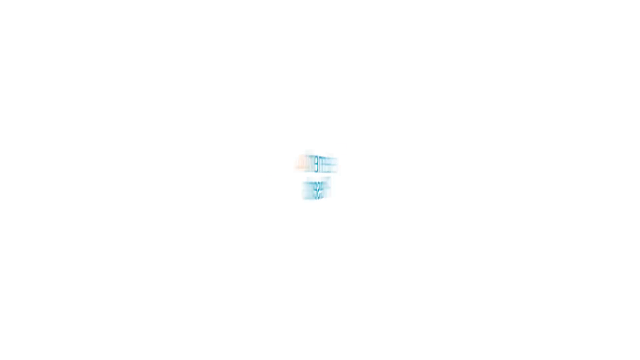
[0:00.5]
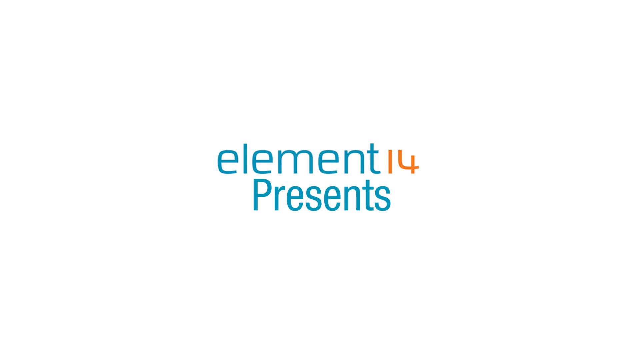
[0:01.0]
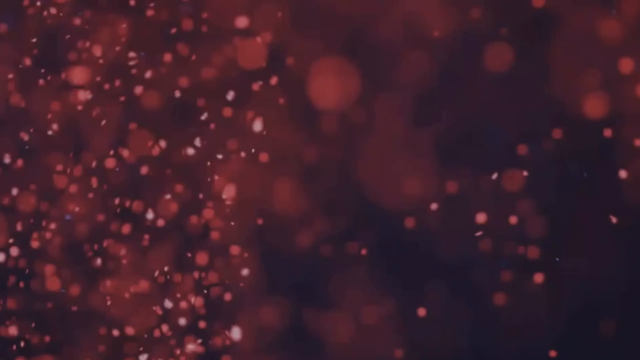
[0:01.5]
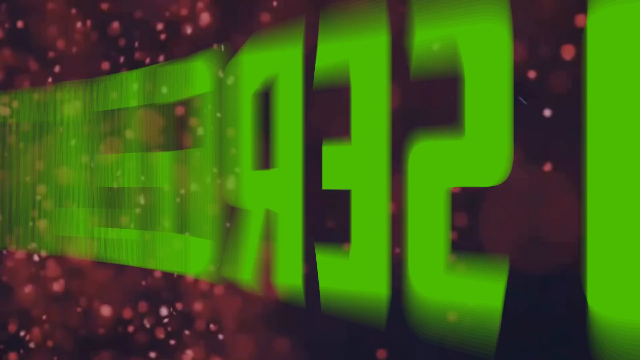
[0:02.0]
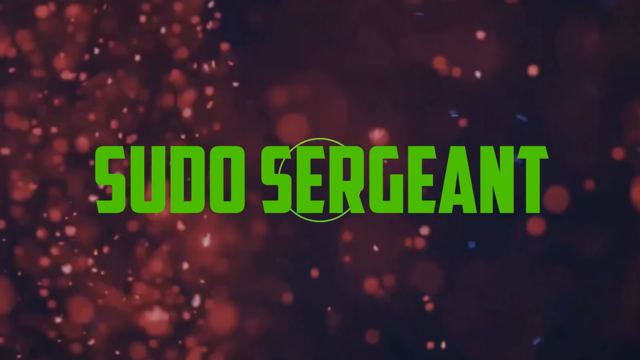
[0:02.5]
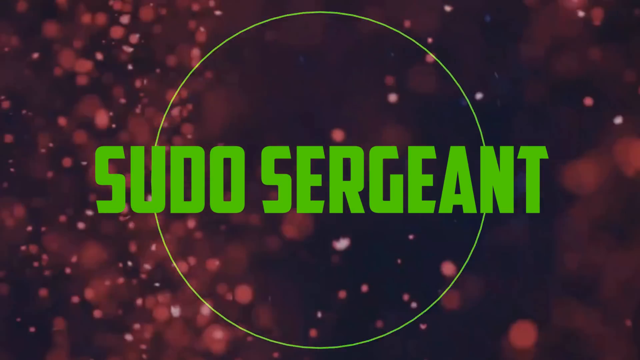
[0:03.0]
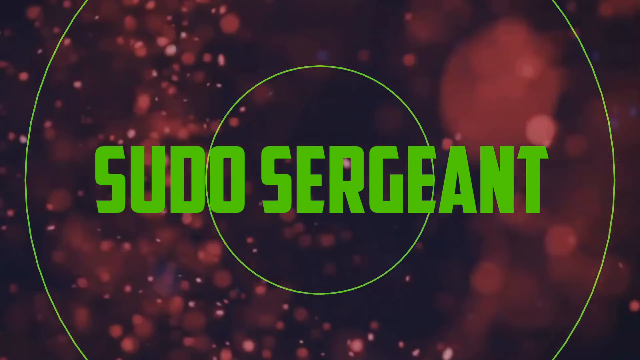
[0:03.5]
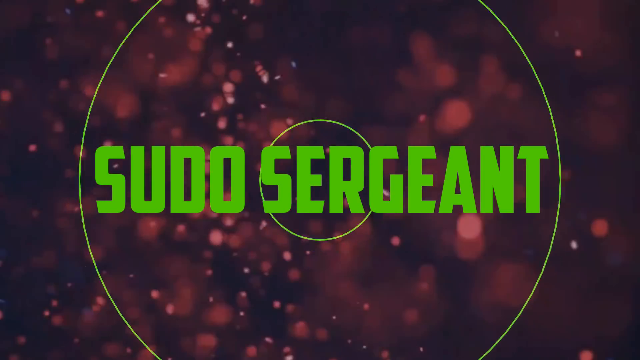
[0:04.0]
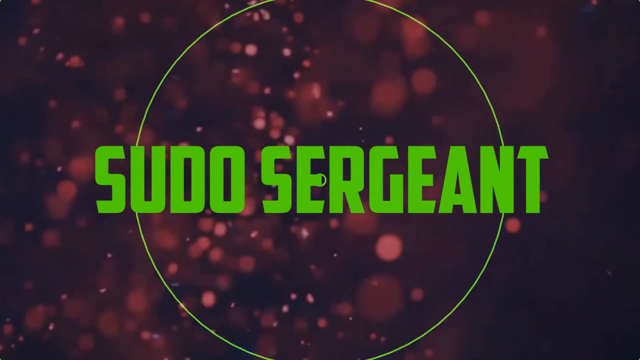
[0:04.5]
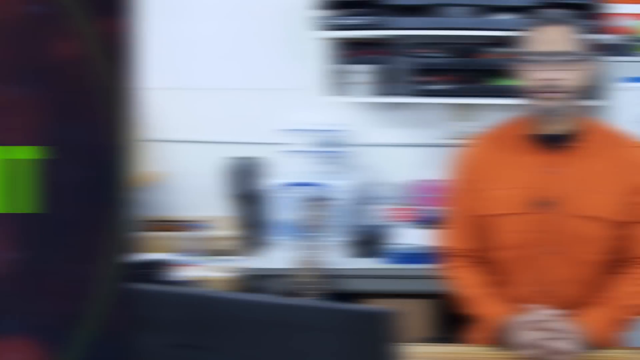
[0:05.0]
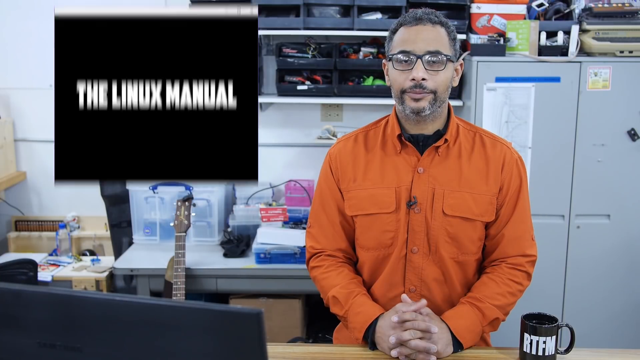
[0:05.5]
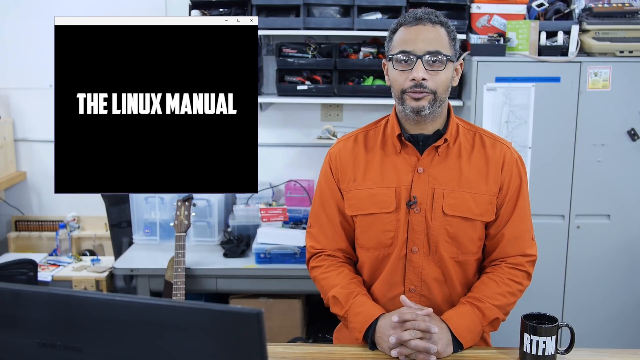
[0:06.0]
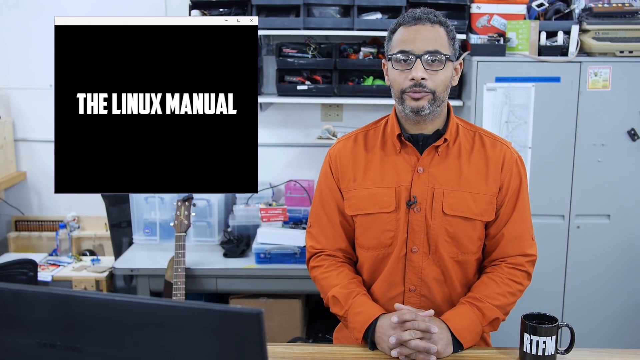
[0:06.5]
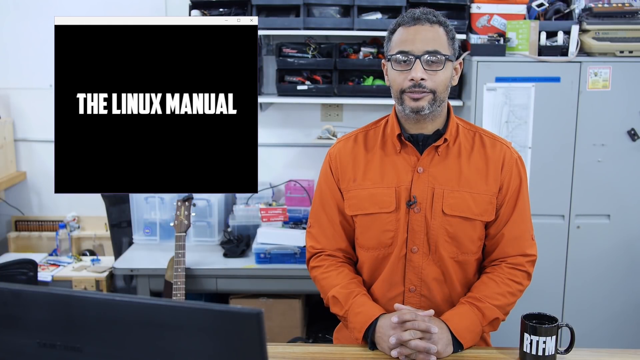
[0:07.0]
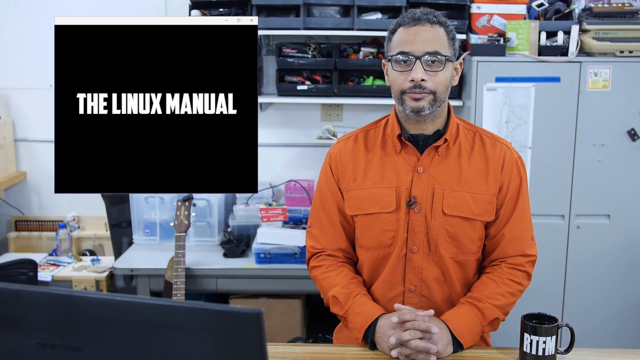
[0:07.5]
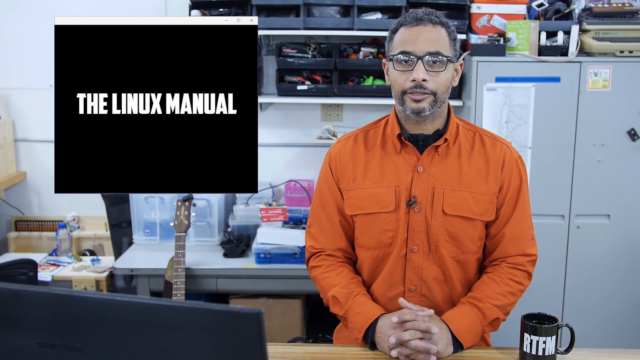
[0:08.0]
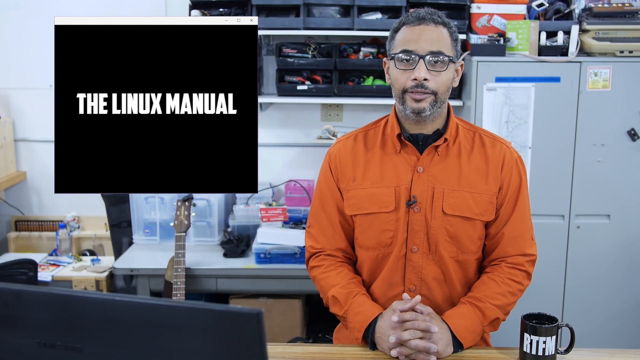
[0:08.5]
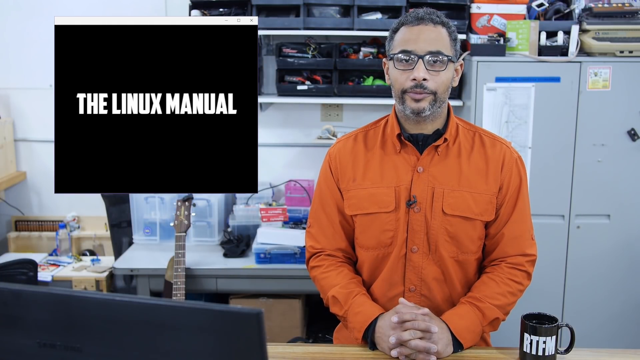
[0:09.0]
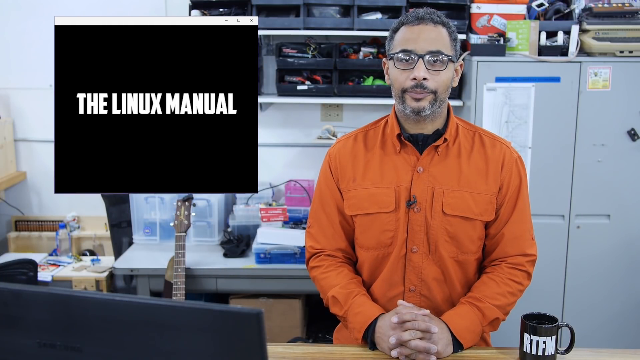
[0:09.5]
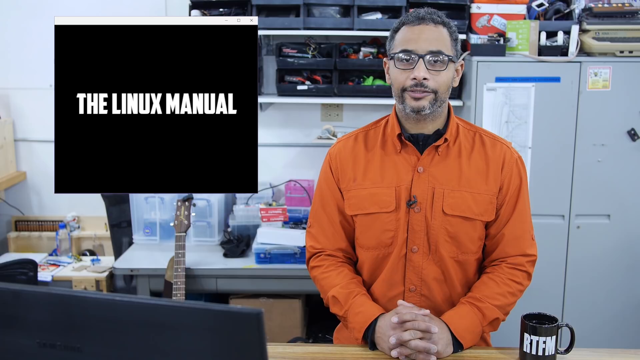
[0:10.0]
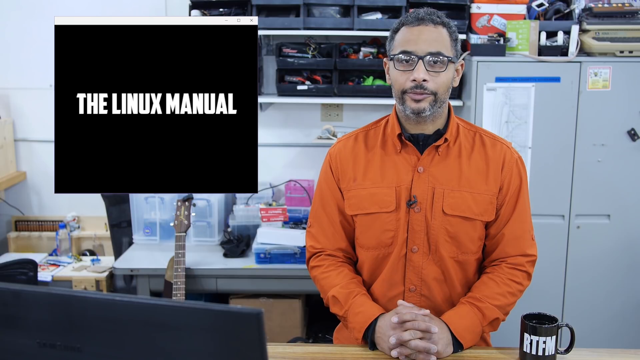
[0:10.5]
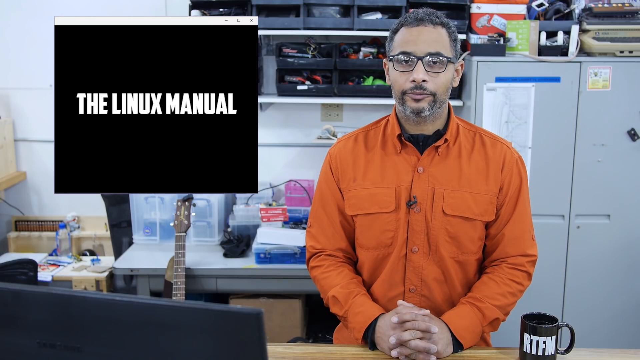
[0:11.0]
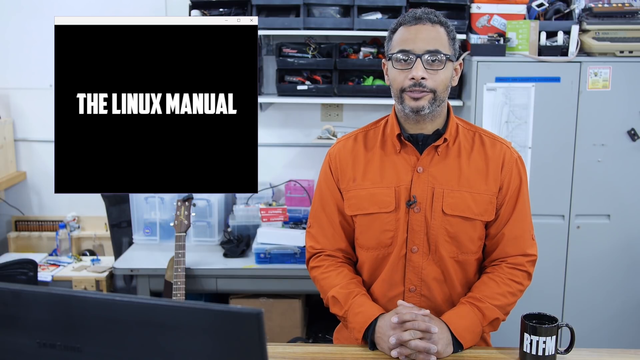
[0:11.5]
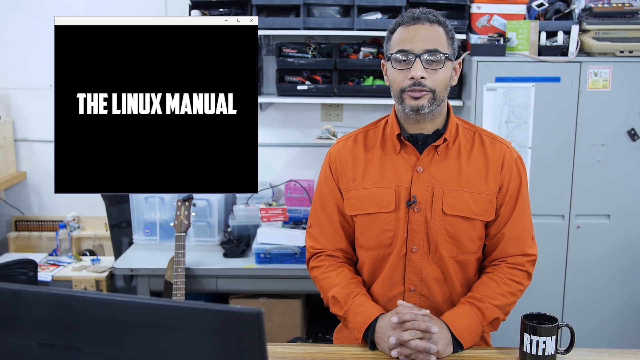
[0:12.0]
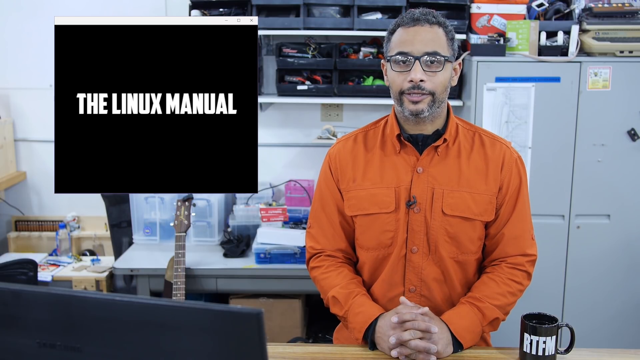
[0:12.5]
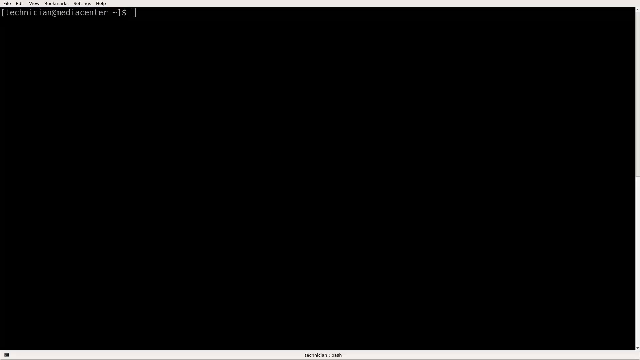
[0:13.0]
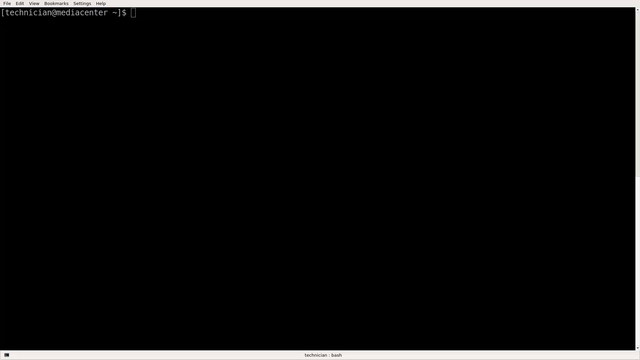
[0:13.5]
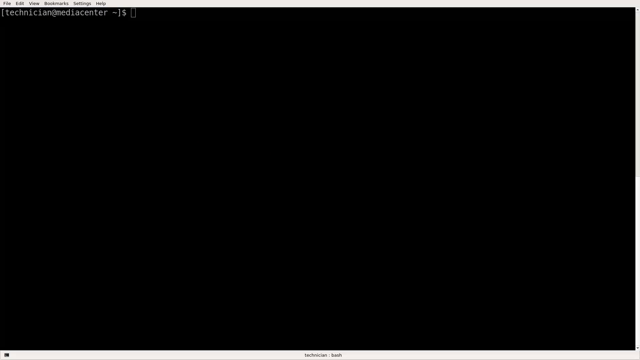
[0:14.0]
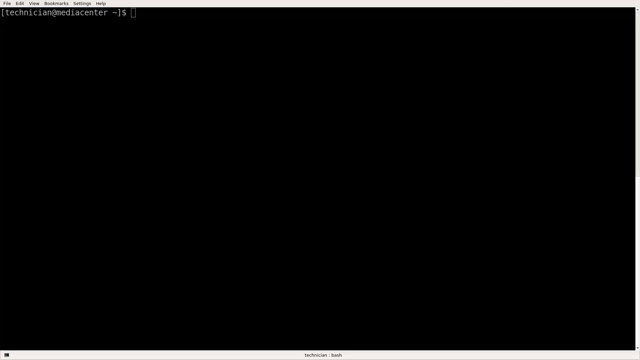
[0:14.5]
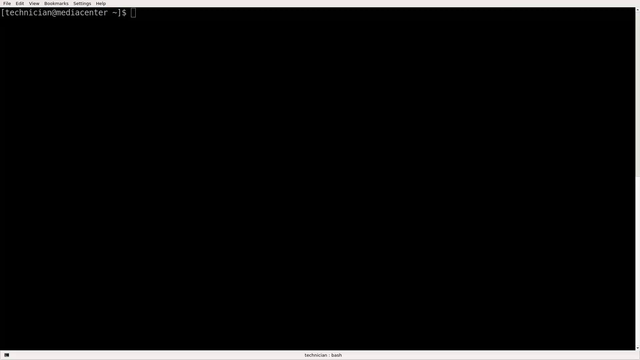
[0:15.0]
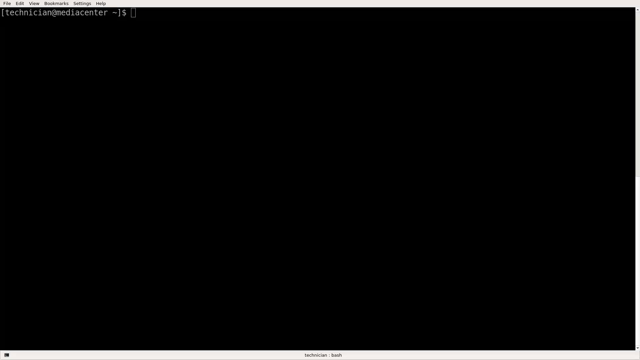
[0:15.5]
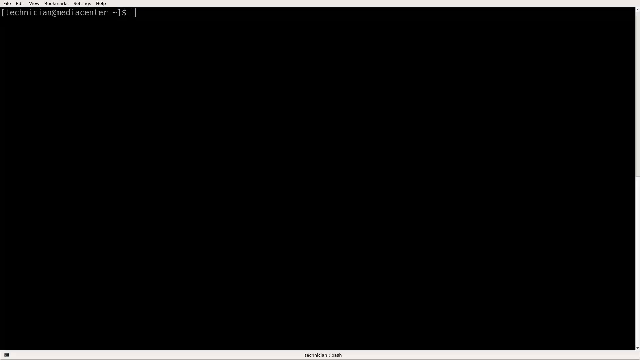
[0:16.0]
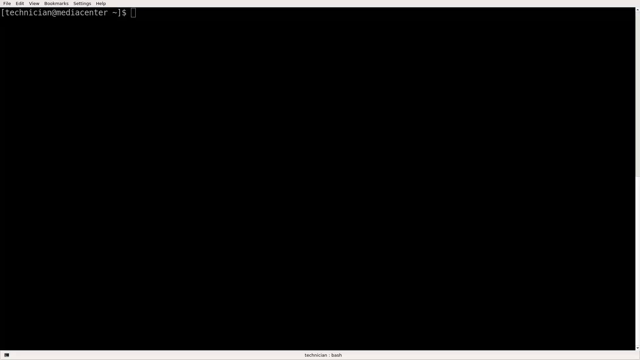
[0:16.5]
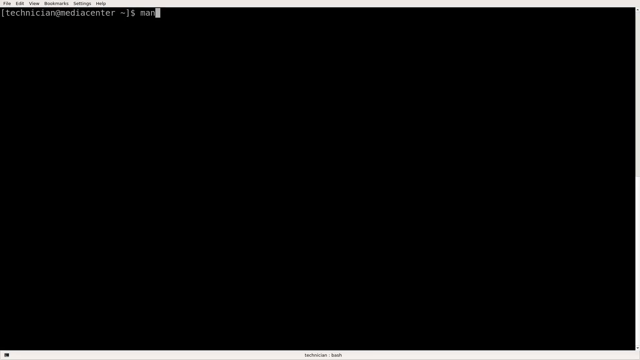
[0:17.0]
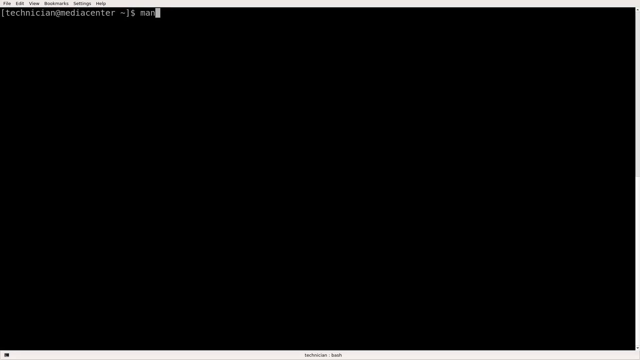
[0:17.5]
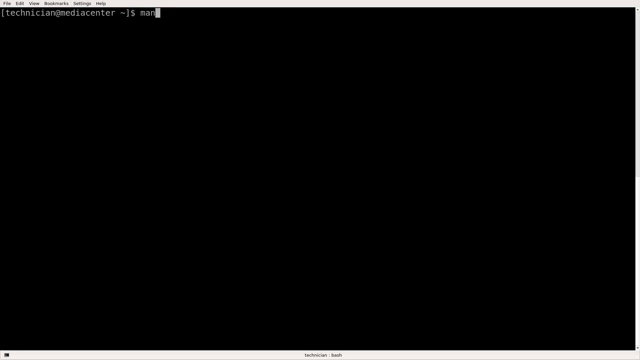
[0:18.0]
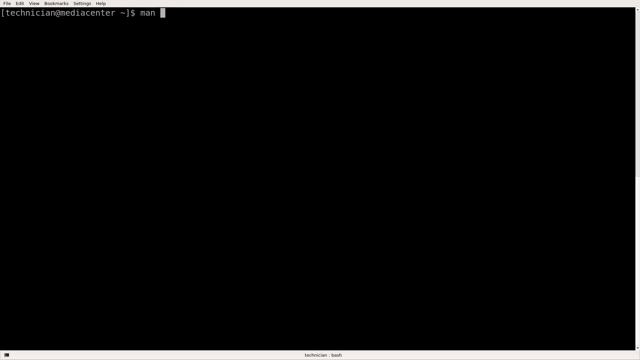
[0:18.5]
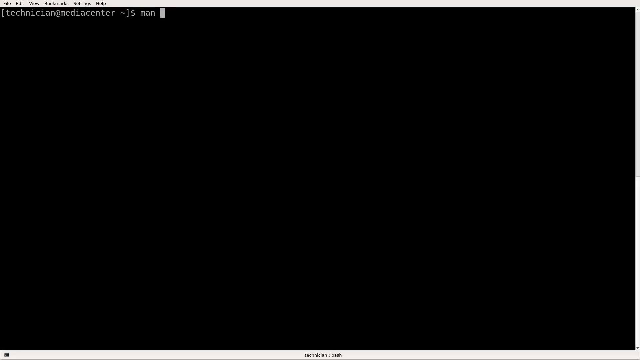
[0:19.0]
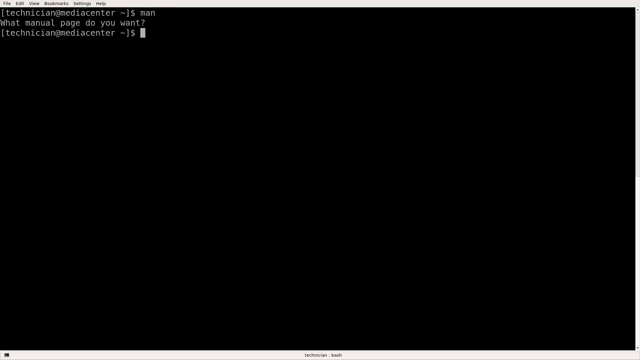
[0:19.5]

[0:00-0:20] The video appears to open as a presentation. A title appears reading "element 14 presents," with "element" all lowercase and the number 14 popping out. The next part of the title reads "Pseudo Sergeant," bolded in green. Behind it is a moving background, kind of blurred with a reddish tint and circles, and sonic-like circles come out of the title. Then "Linux manual" appears. An individual with lightish brown skin and a kind of grayish beard wears glasses and has their hands folded. They are talking a bit, eyes blinking normally, and a little glare from the light shows on their glasses. To the right, a guitar neck pokes up. The setting seems to be some type of engineering place, possibly a shop area. The video then goes to a black screen where what looks like computer code is being processed or written.